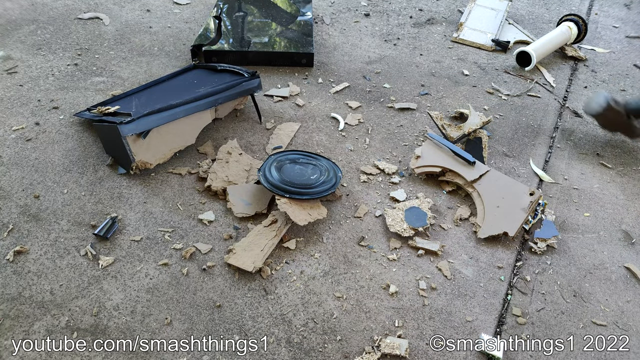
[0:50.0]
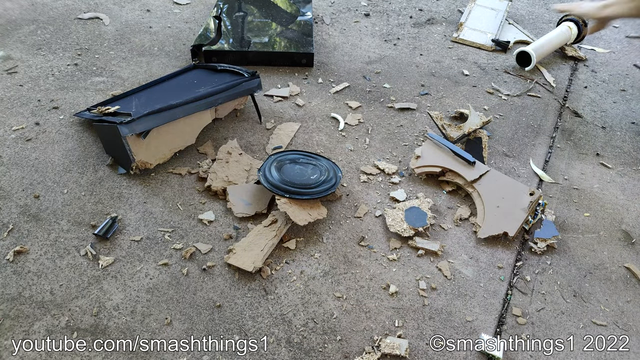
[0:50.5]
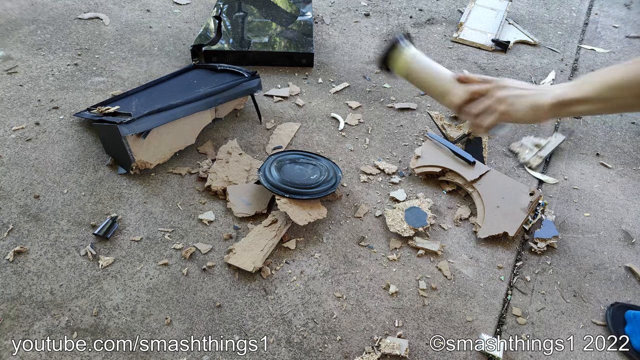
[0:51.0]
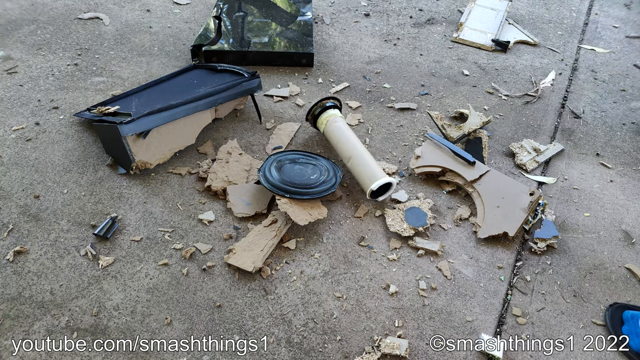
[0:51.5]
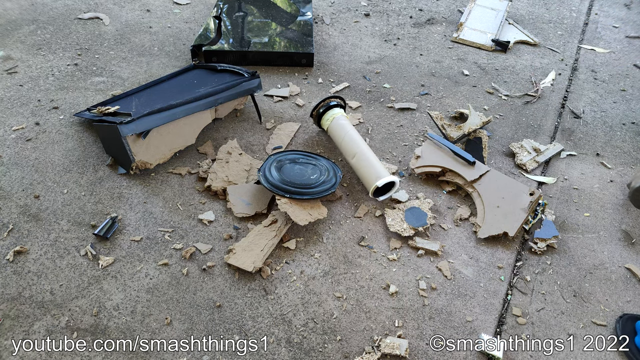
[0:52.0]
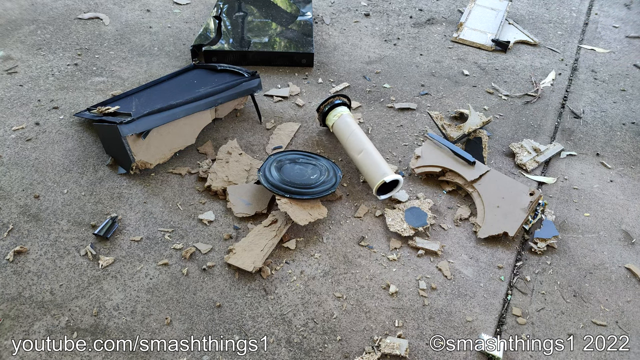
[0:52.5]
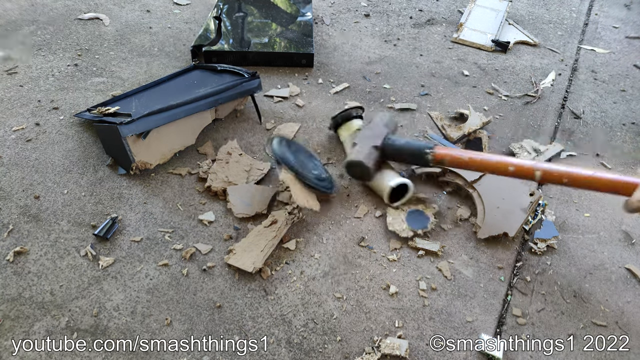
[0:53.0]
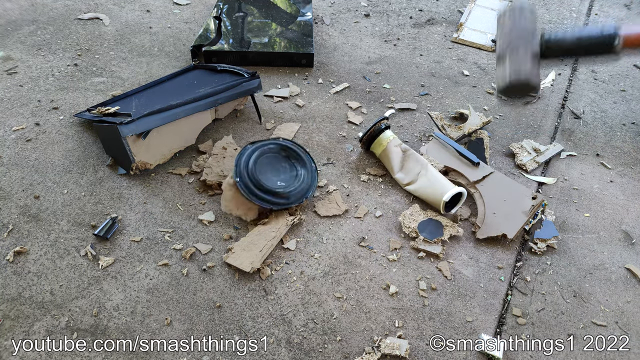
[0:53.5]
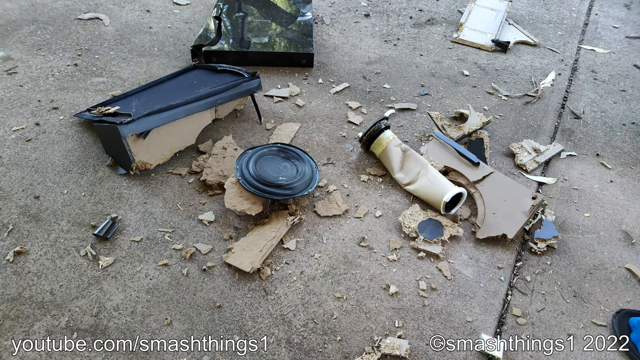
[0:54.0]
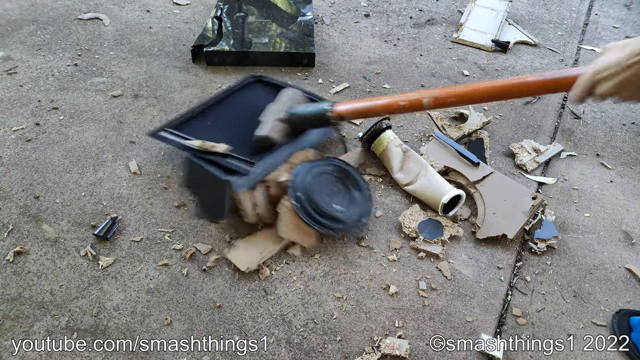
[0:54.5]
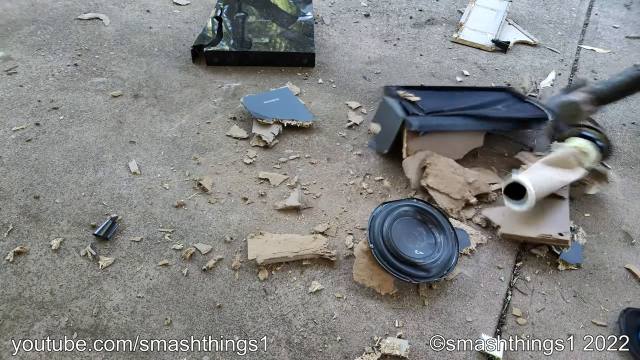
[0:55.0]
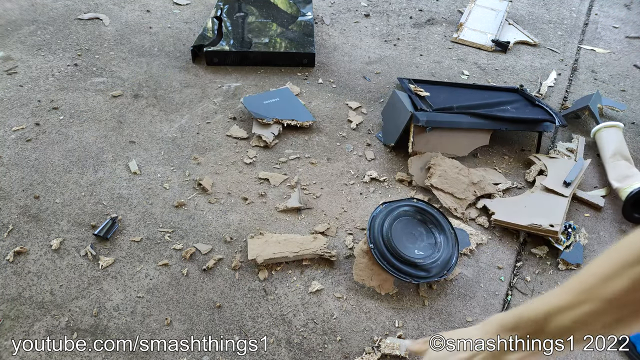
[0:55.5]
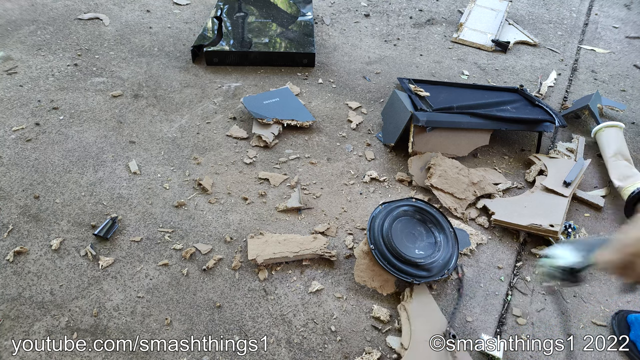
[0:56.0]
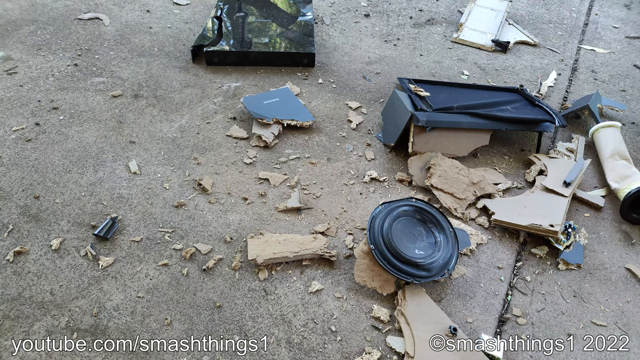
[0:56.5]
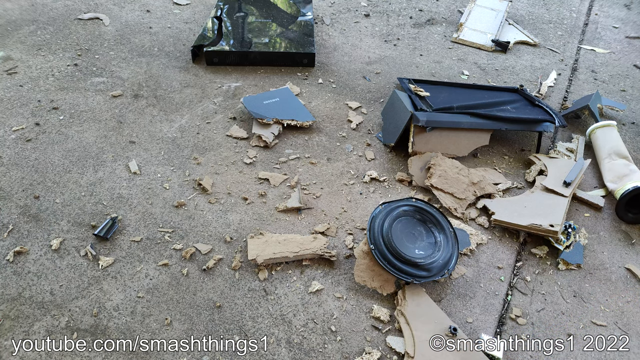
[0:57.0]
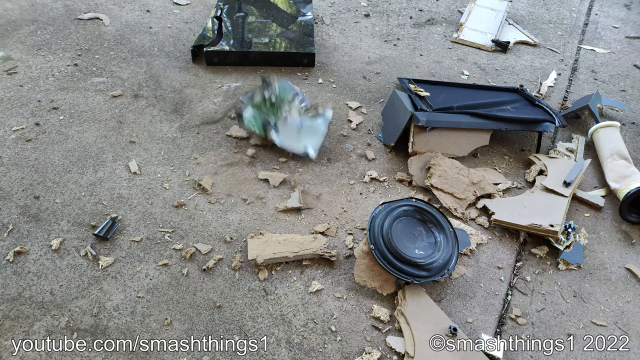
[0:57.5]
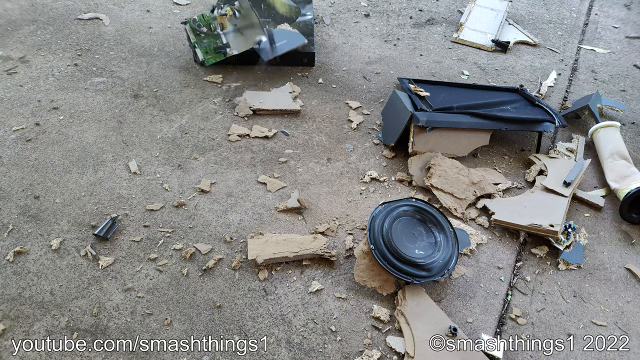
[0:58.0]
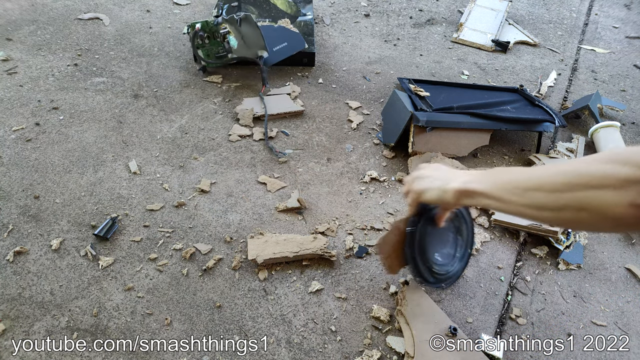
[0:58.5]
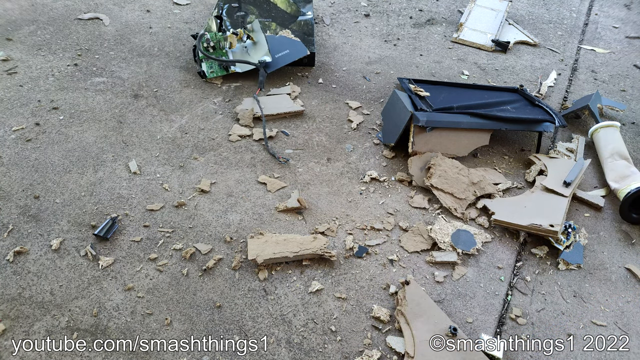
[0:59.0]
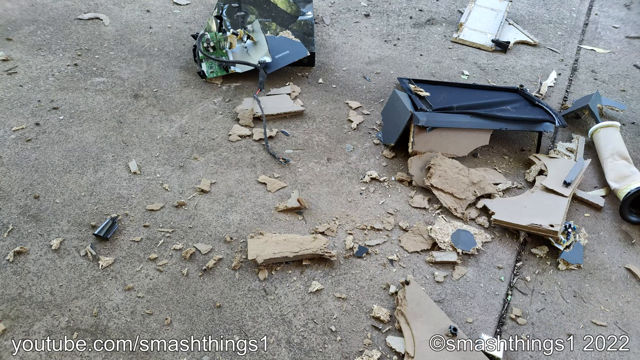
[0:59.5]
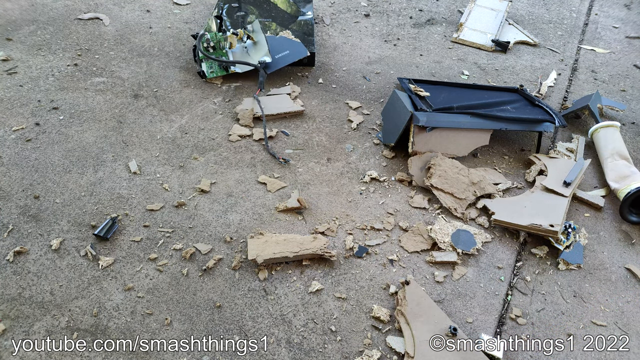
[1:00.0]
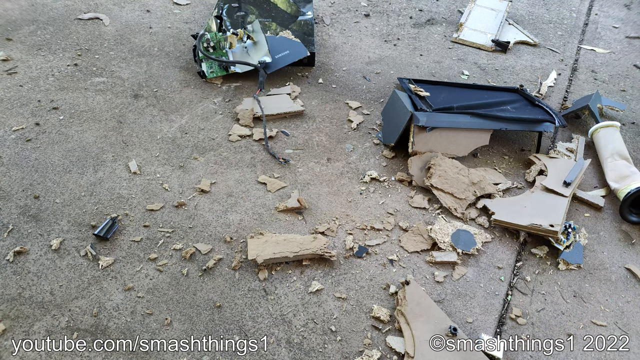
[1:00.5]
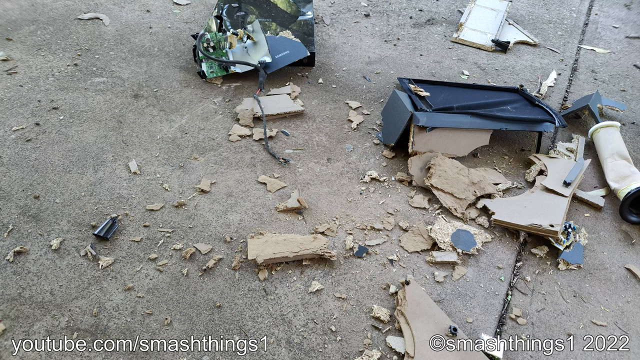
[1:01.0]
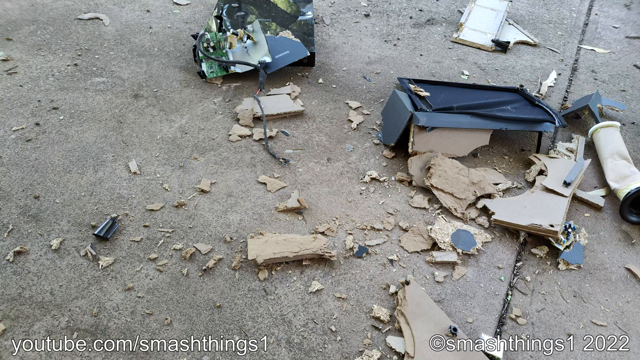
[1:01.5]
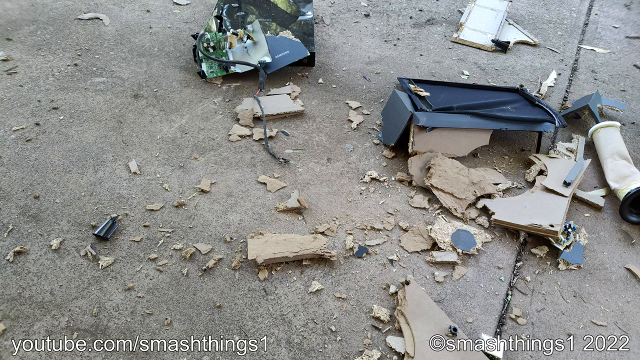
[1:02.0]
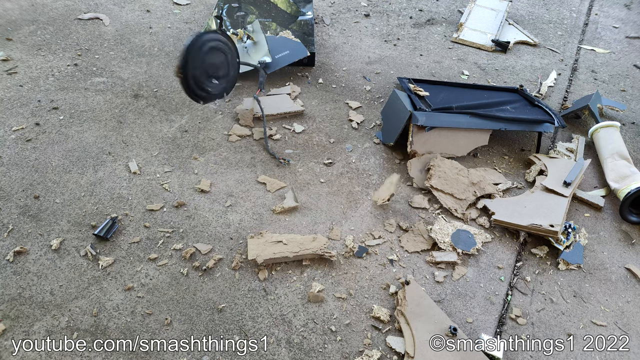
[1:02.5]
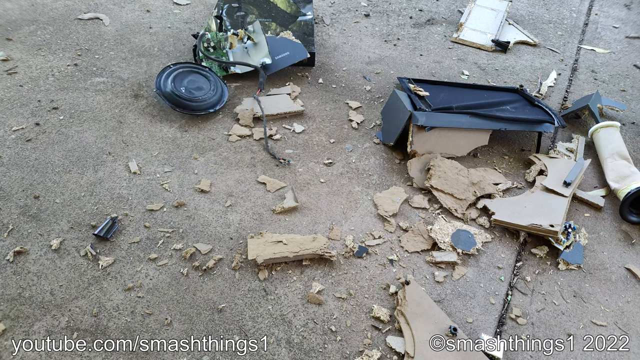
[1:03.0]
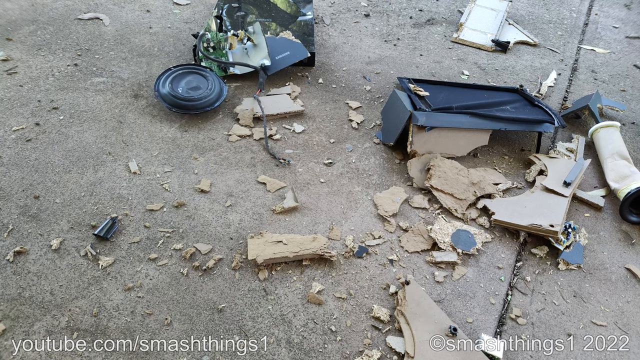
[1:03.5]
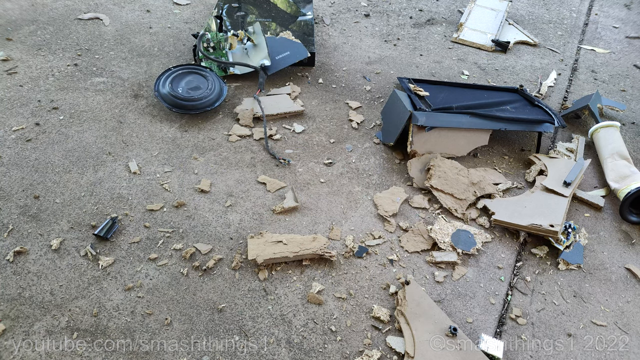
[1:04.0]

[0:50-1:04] Outside in the daytime, a man is smashing things on the ground on top of a large cement slab. He has busted a computer speaker into several different pieces, and large and small pieces of particle board are laying all over the ground, making a big mess. He is possibly angry. He hits things very hard with a sledgehammer, picks up some of the pieces and throws them down into a big pile, and then throws the speaker on the ground really hard.